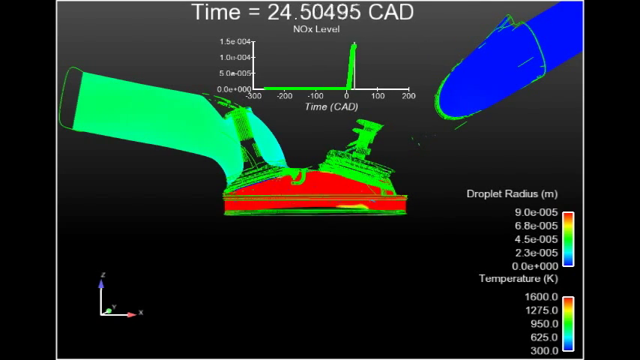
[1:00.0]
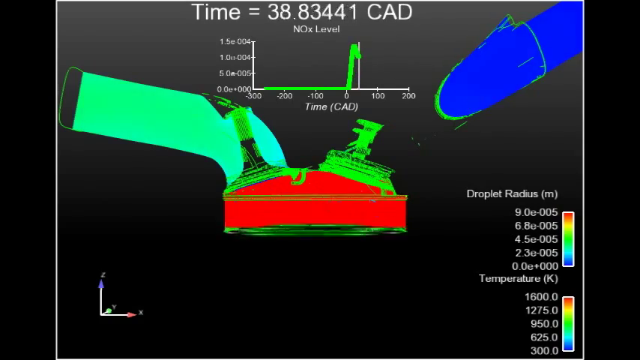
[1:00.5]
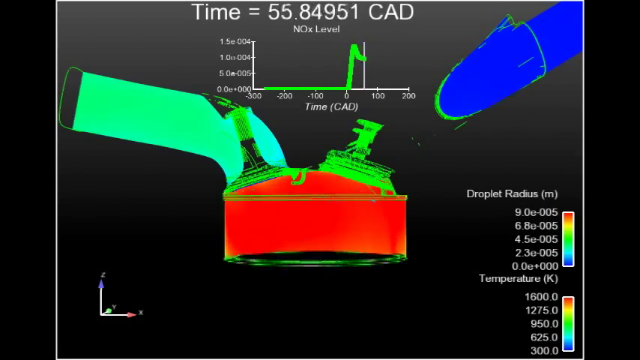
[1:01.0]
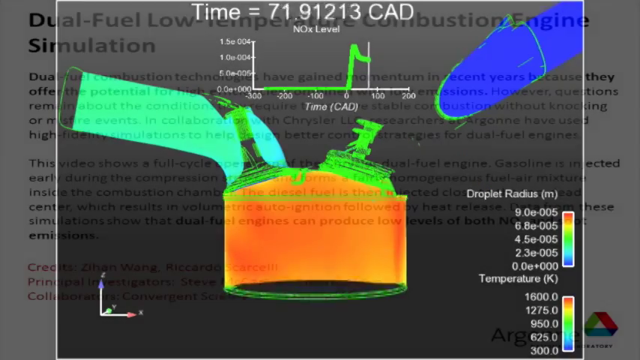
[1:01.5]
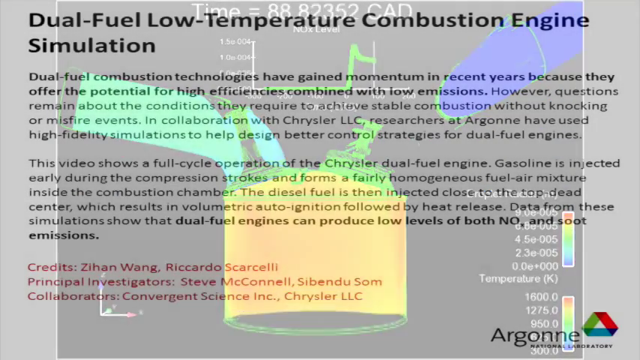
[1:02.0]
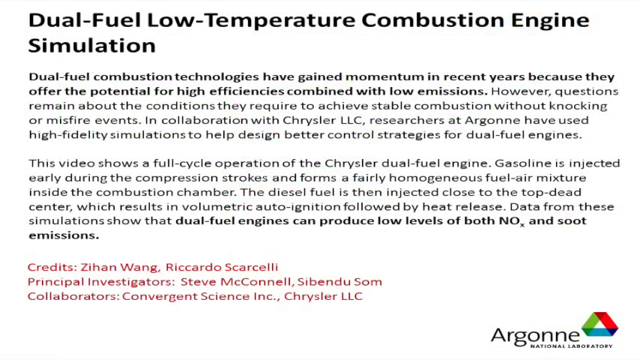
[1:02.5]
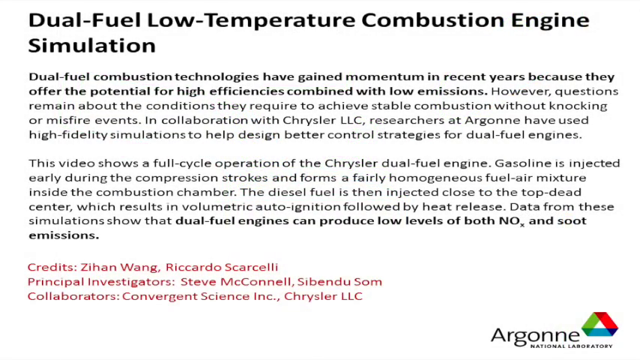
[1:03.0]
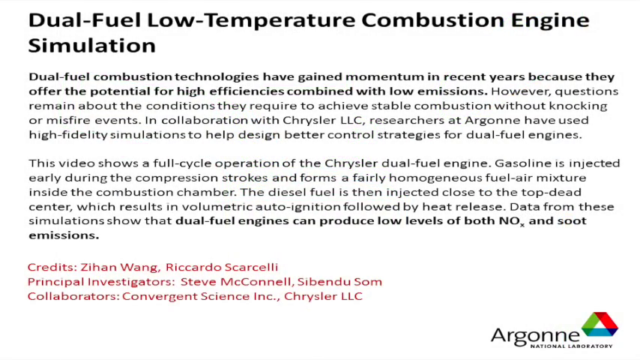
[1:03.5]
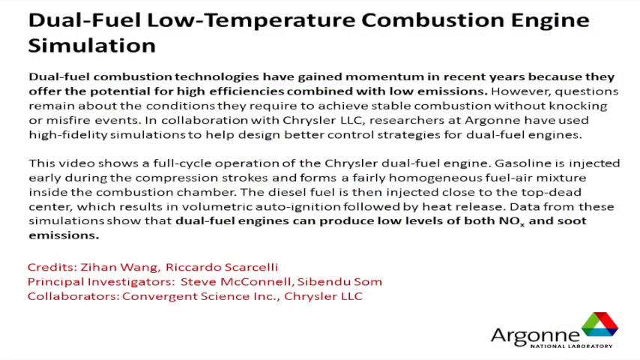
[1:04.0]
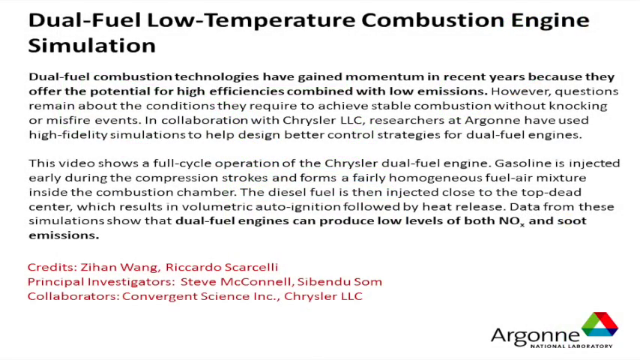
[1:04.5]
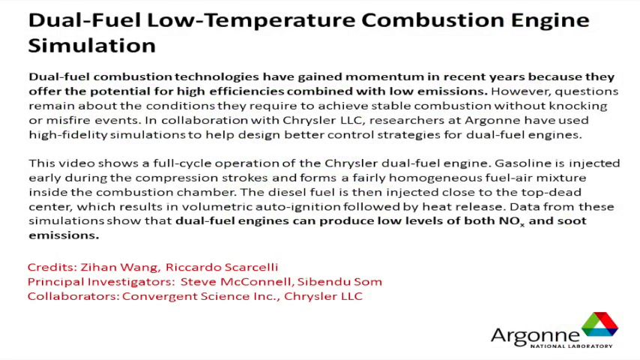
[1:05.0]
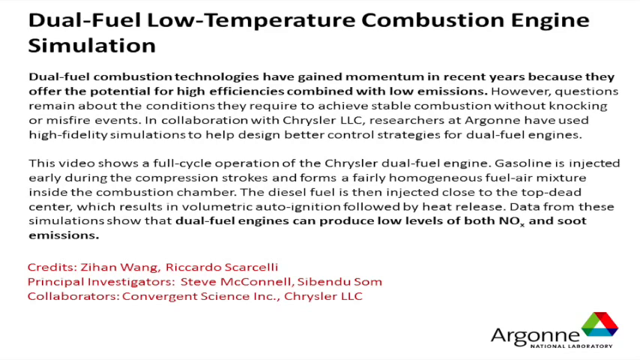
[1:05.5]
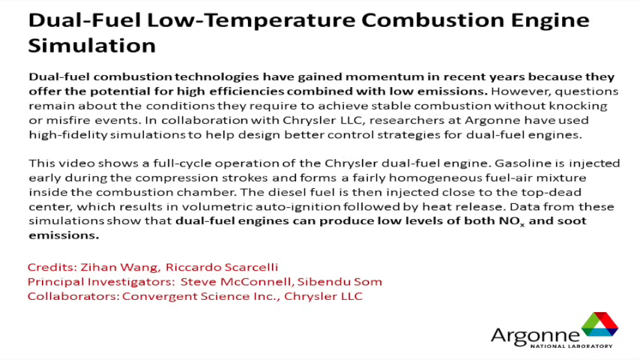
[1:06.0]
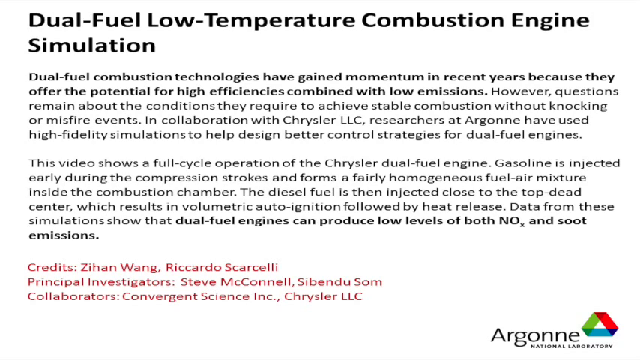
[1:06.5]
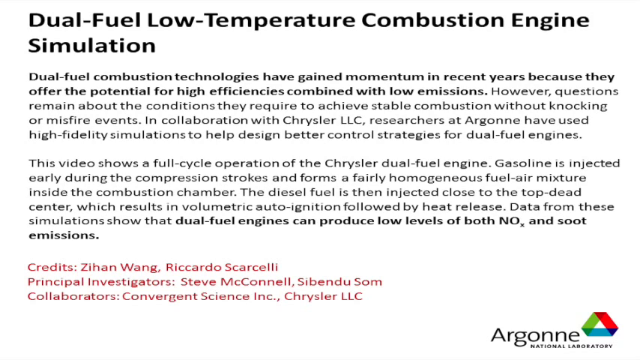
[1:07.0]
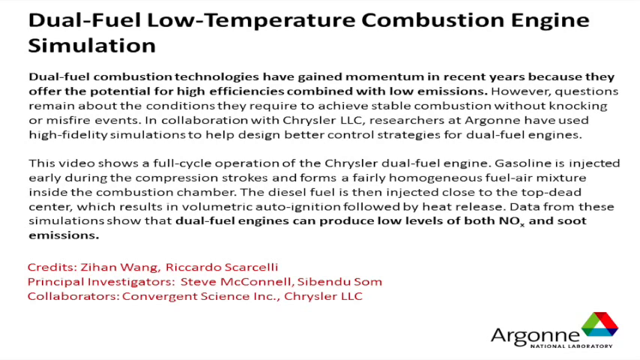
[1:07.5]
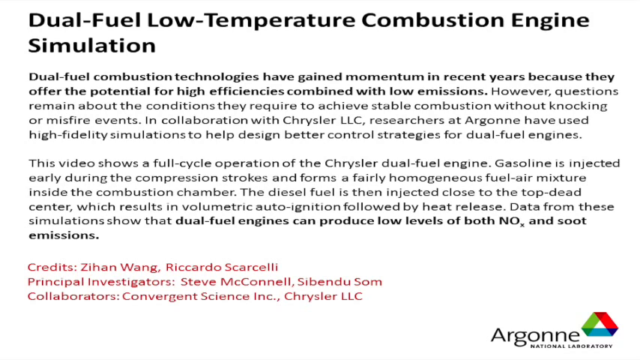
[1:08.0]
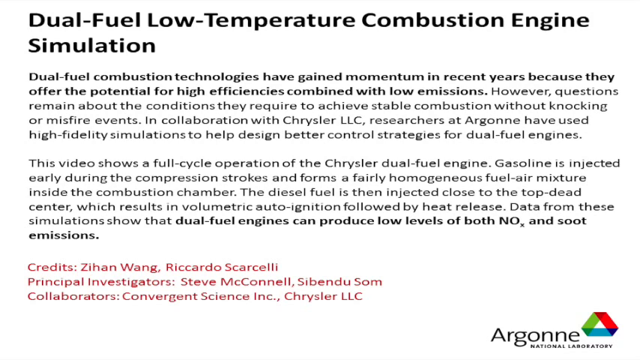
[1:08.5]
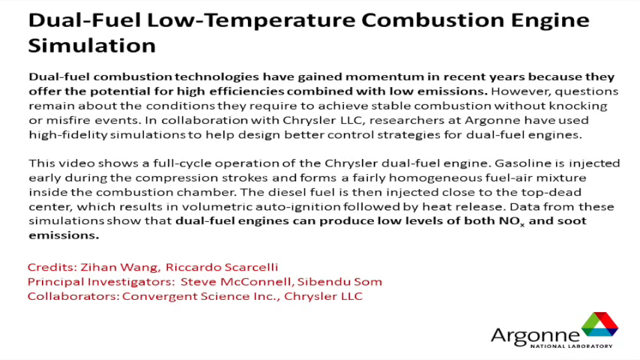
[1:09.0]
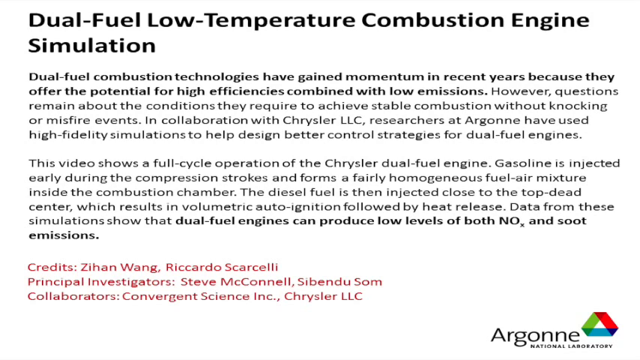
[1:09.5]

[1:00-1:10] The graphic of the engine or motor and its combustion process is shown briefly, then the video transitions to what looks to be a text document. It reads "dual fuel low temperature combustion engine simulation," and below that are a couple of paragraphs that appear to describe the combustion process and what the video shows. The text briefly states that the video shows the combustion or fuel cycle operation in a Chrysler dual fuel engine and explains it in further detail.